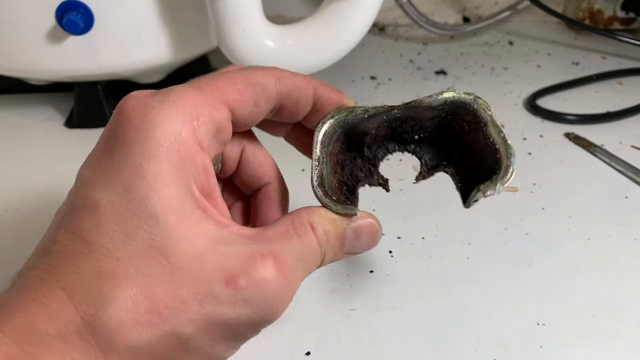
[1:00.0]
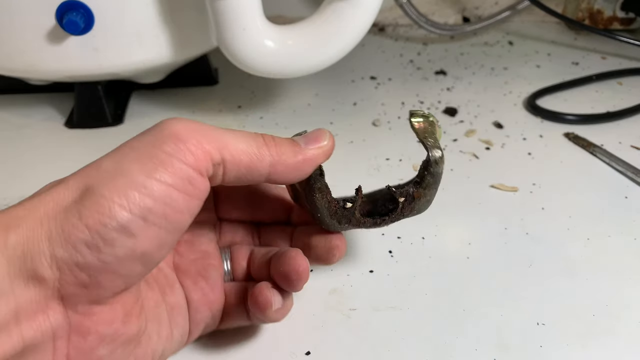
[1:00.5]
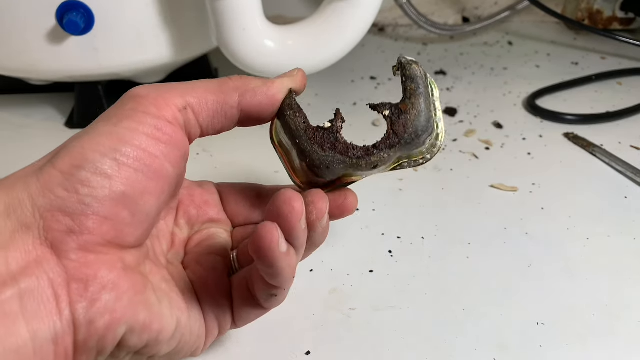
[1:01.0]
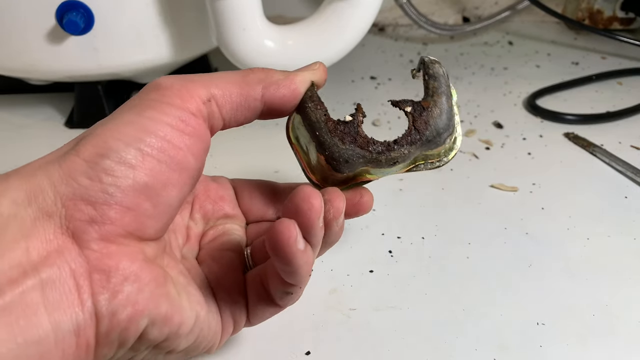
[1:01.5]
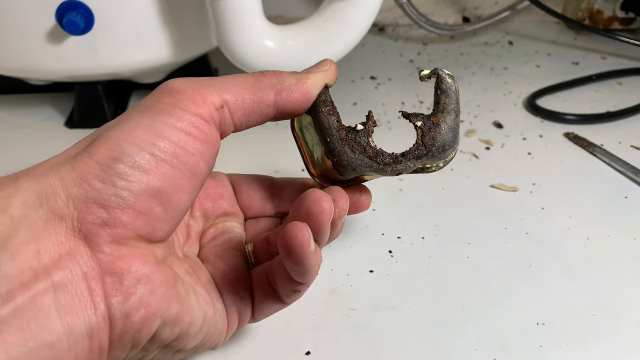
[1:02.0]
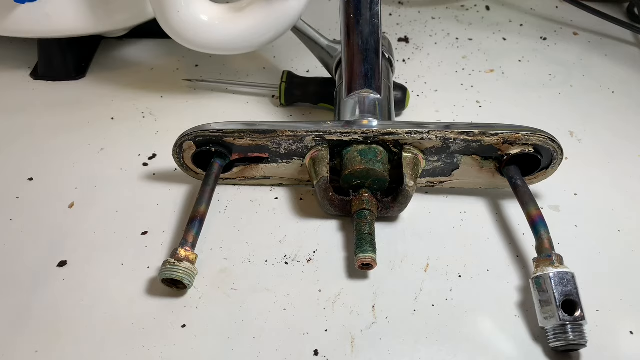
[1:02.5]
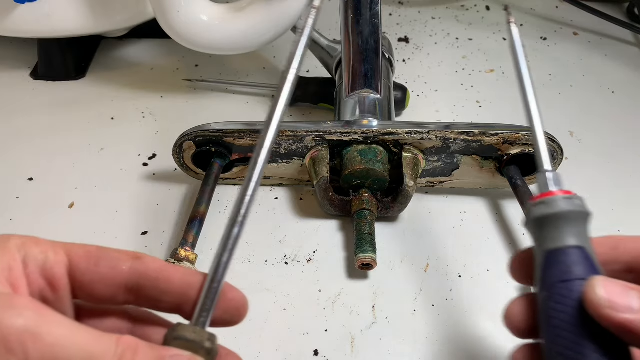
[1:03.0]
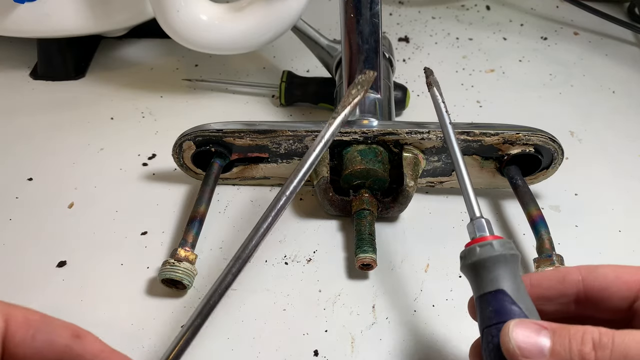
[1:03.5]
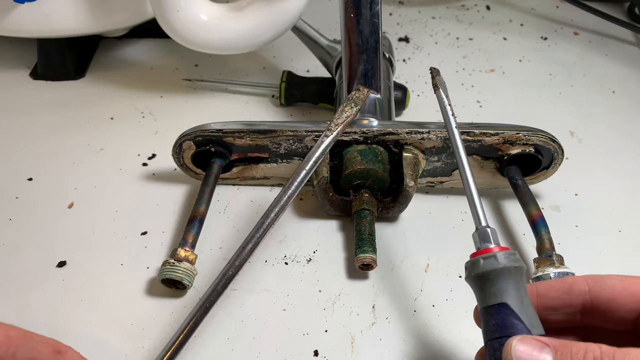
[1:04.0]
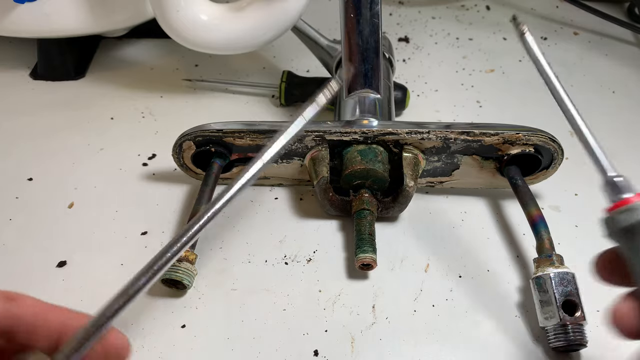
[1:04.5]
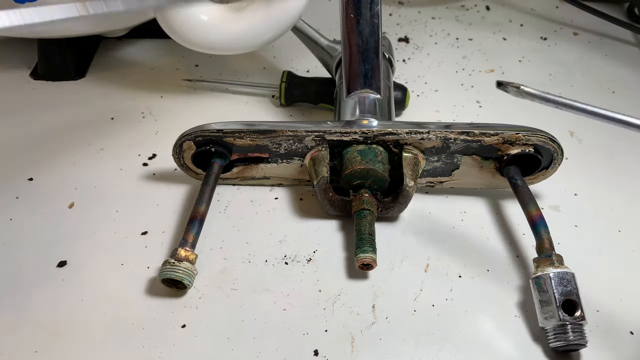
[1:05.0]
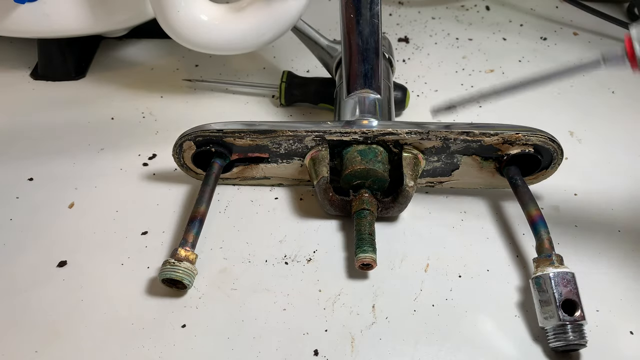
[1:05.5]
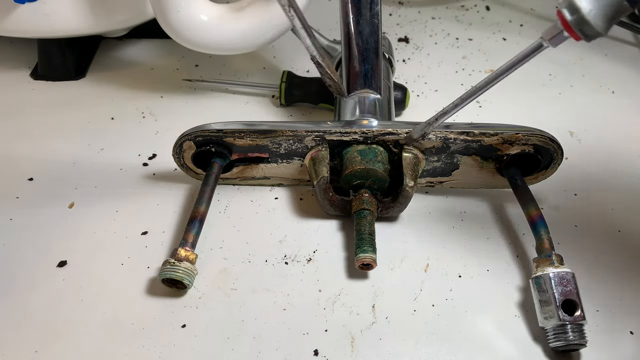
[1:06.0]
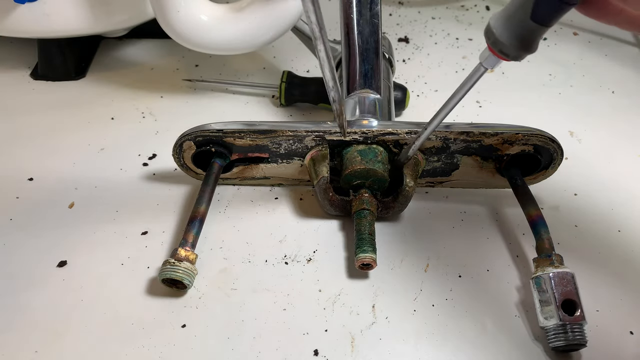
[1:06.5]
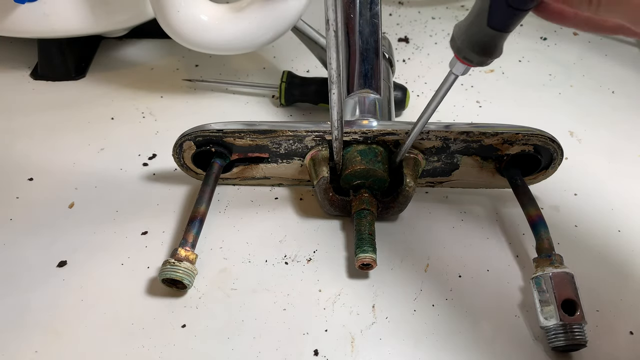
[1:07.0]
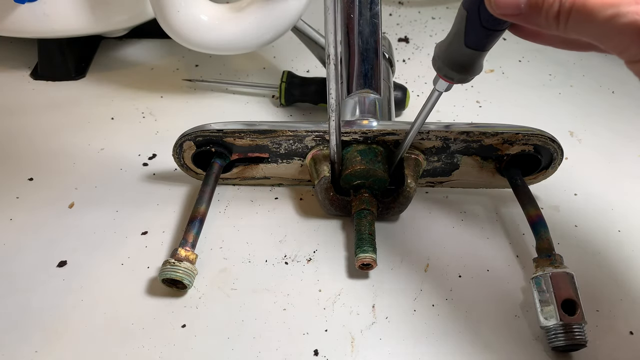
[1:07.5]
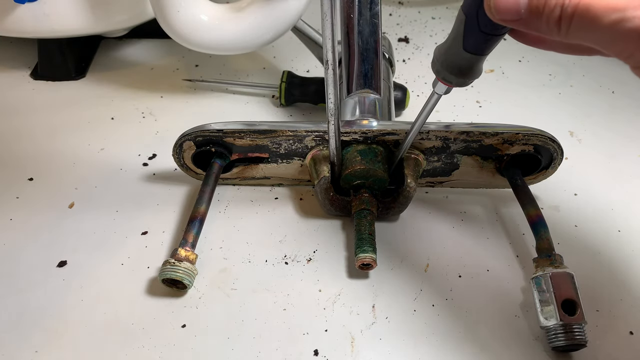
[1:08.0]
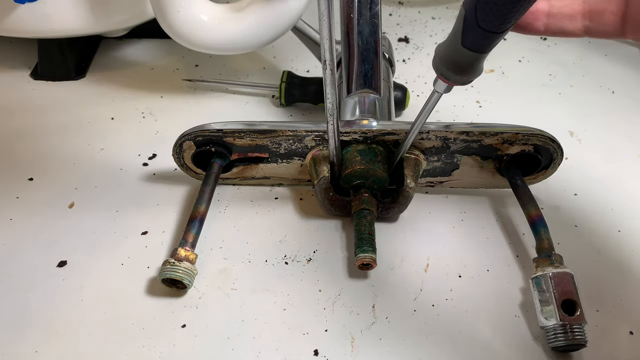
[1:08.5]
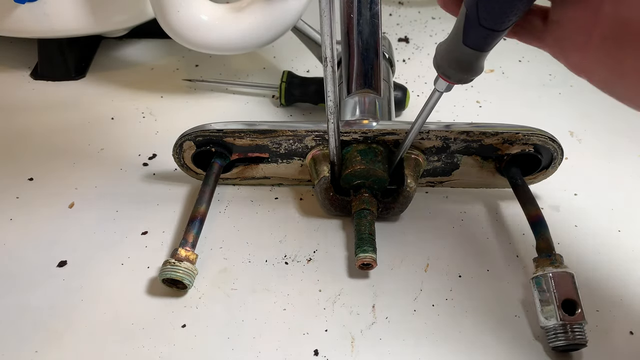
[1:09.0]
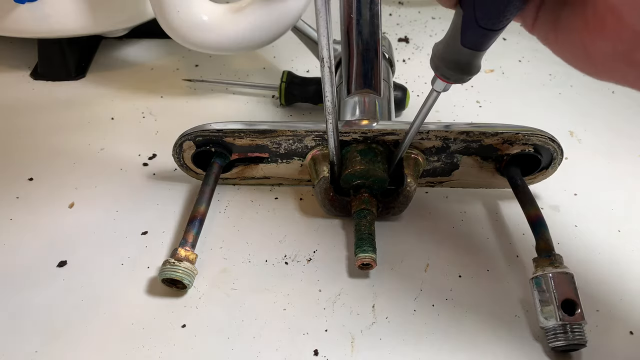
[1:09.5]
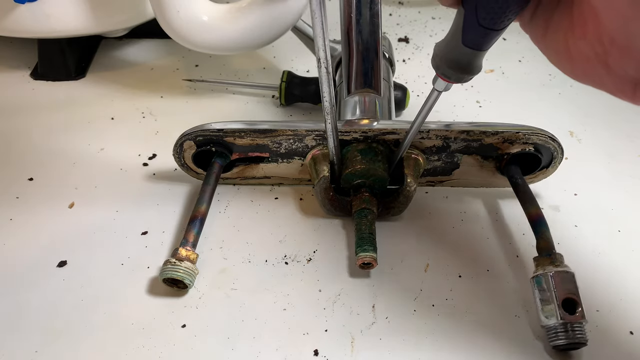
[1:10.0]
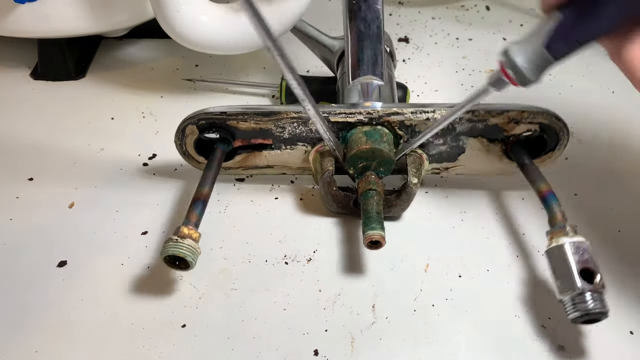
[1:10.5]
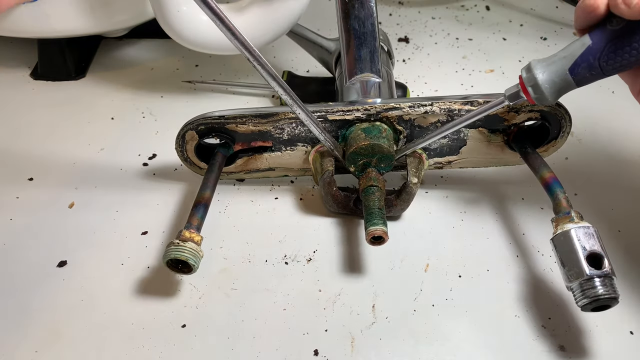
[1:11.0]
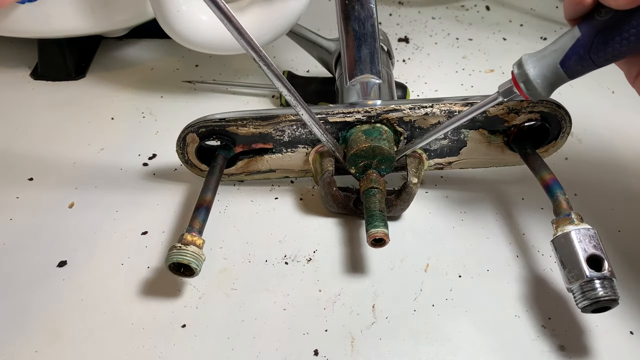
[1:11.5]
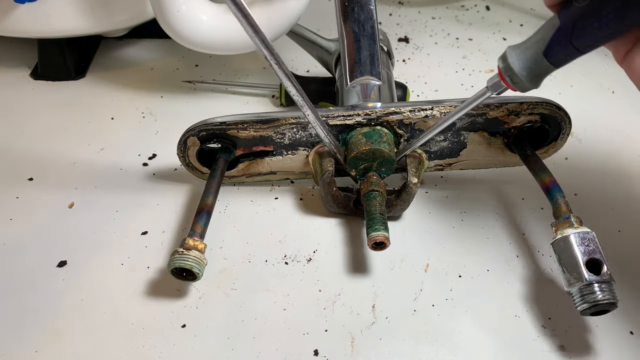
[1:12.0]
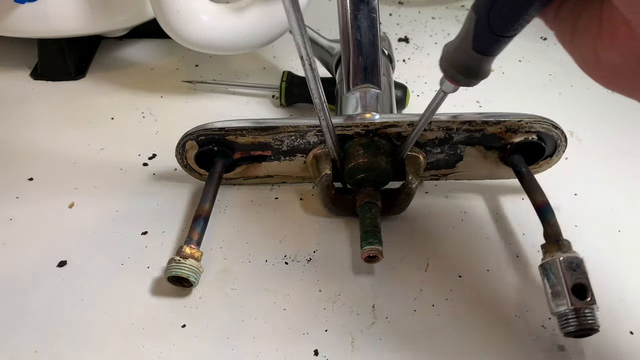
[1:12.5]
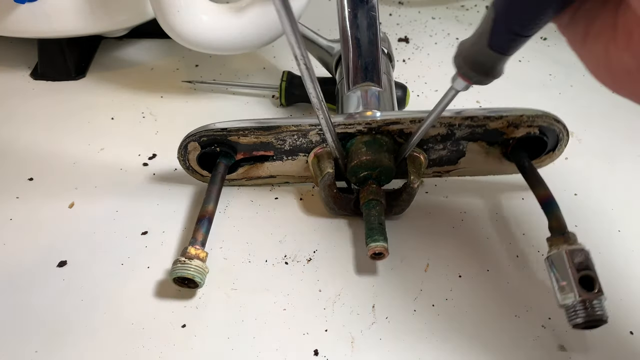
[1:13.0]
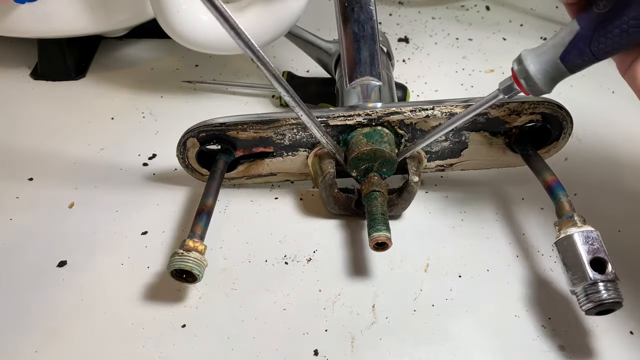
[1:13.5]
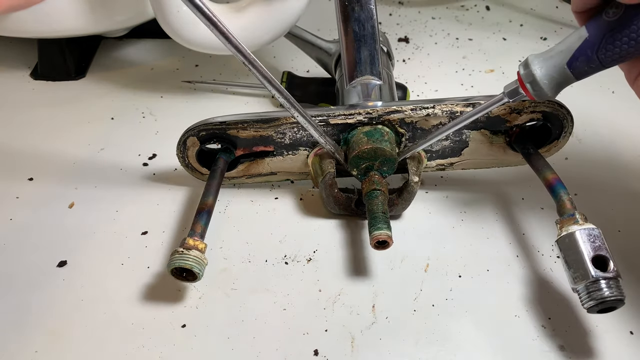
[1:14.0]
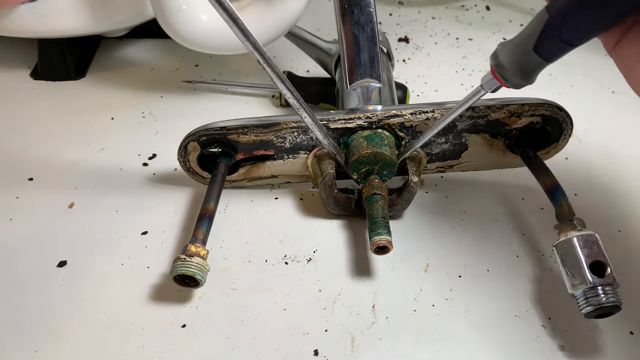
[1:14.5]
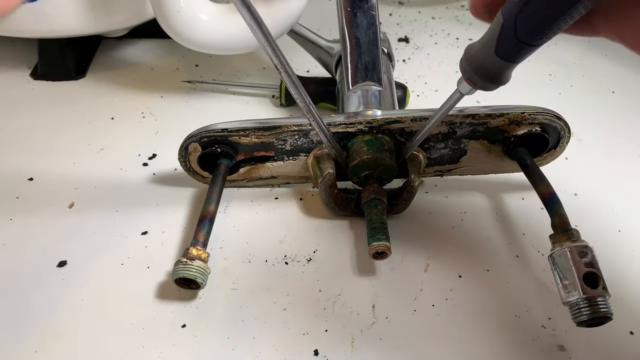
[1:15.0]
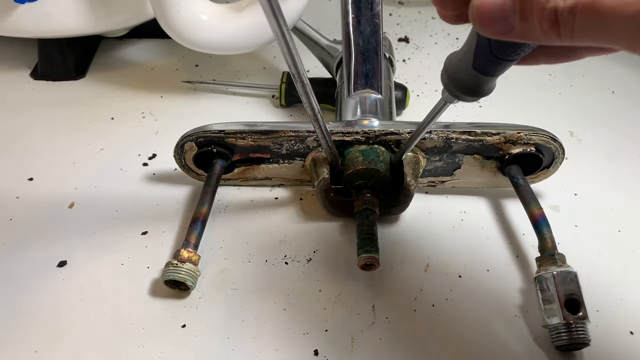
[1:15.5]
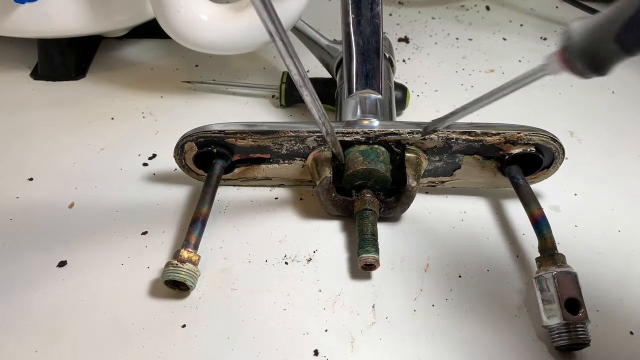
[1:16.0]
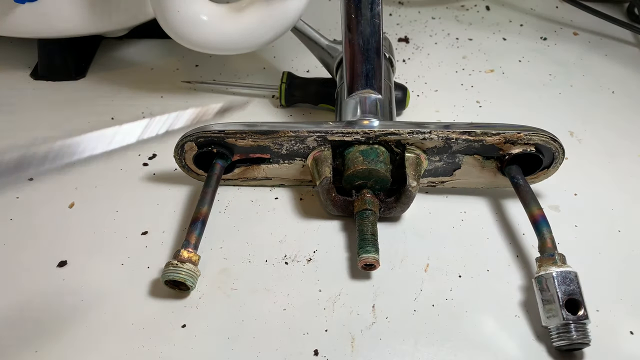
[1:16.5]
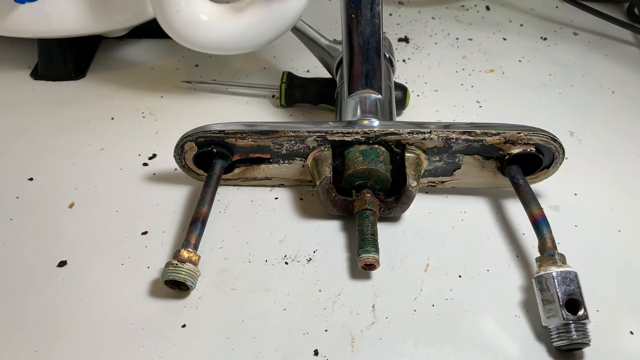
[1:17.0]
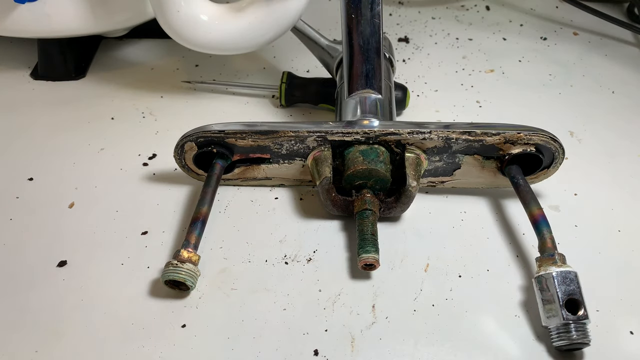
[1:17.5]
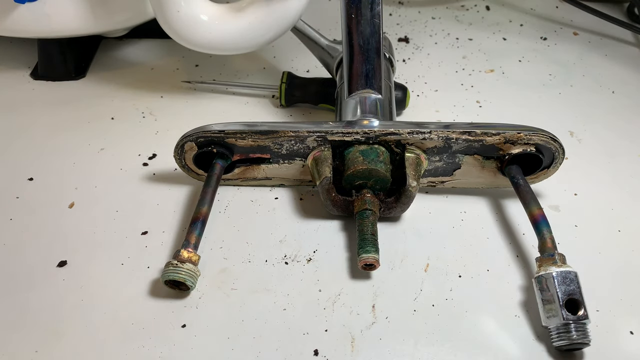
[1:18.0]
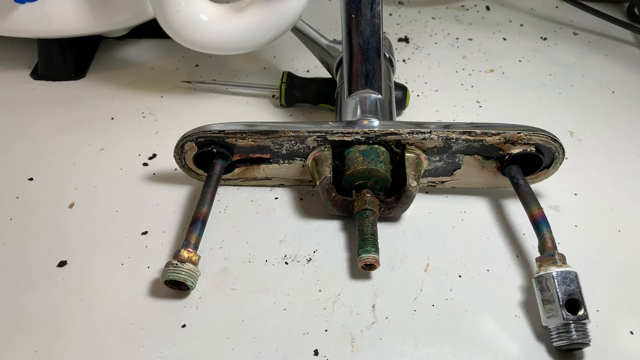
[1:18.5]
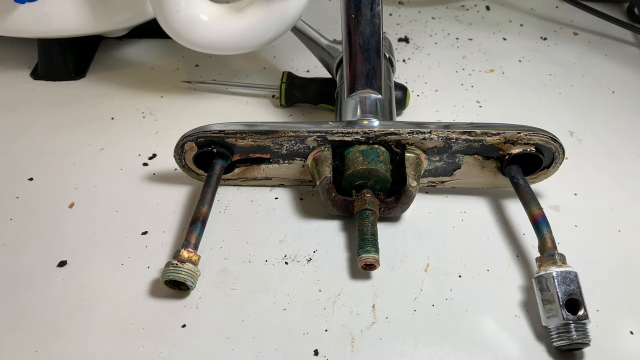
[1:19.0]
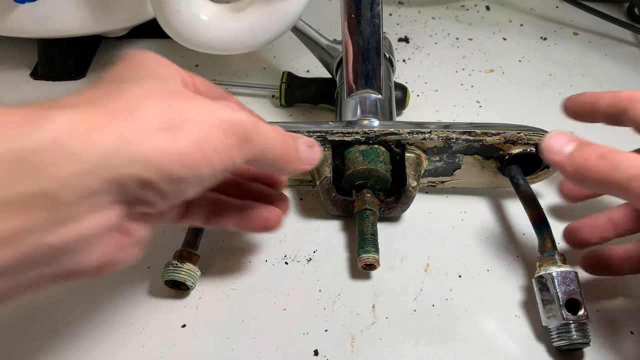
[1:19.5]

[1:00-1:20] The man turns his hand so his arm faces upward; his little, ring and middle fingers are bent over, forming a kind of diagonal line between the little finger and the forefinger, while his thumb holds the other side of the rusty piece of metal. The handyman brings in screwdrivers from either side and looks at the size of the screwdriver, then inserts one on either side of the broken piece of metal and prises the casing apart so that the connectors below come away from the broken piece. While doing this, he has rested the stem of the faucet above on a smaller screwdriver, presumably to keep it level so it does not wobble while he inserts the two screwdrivers.